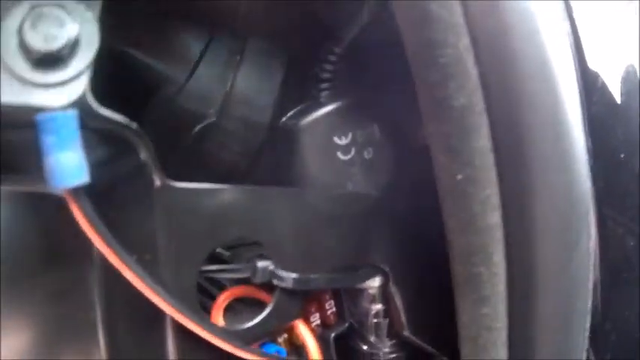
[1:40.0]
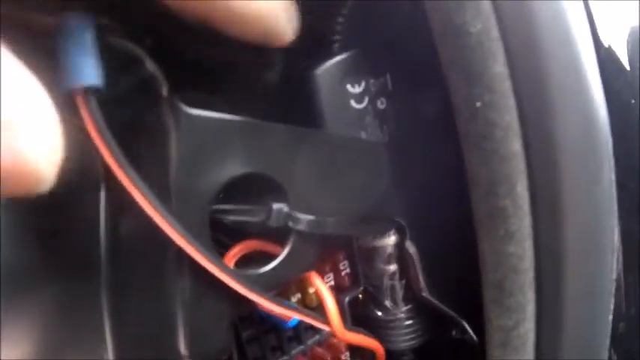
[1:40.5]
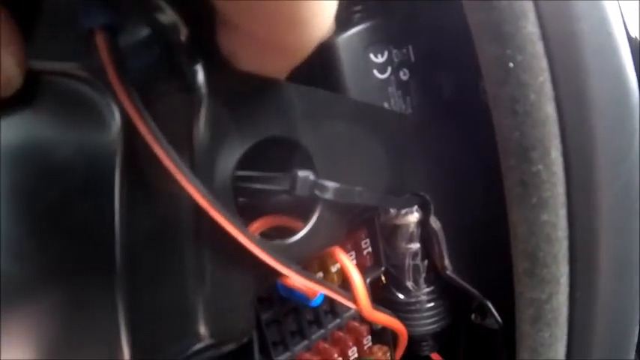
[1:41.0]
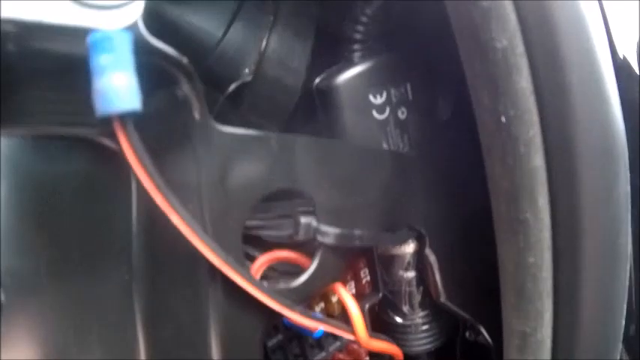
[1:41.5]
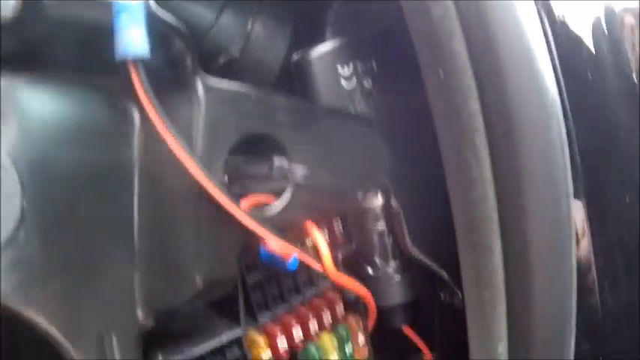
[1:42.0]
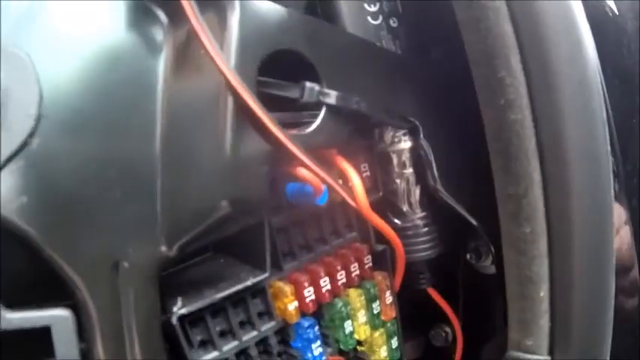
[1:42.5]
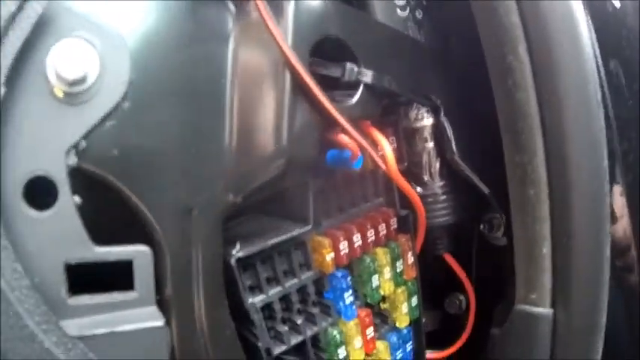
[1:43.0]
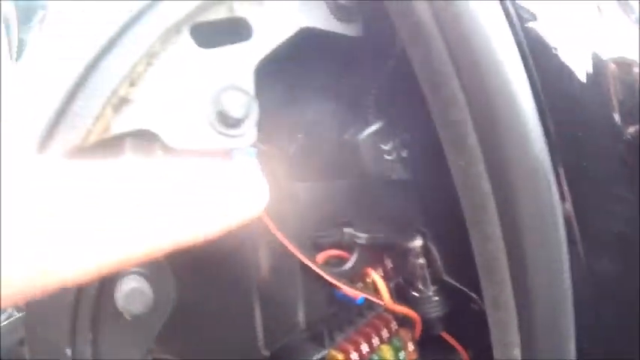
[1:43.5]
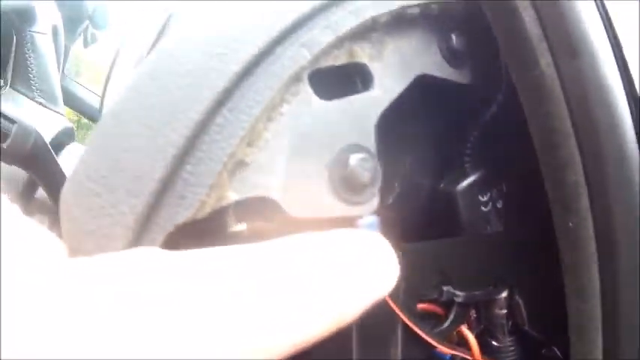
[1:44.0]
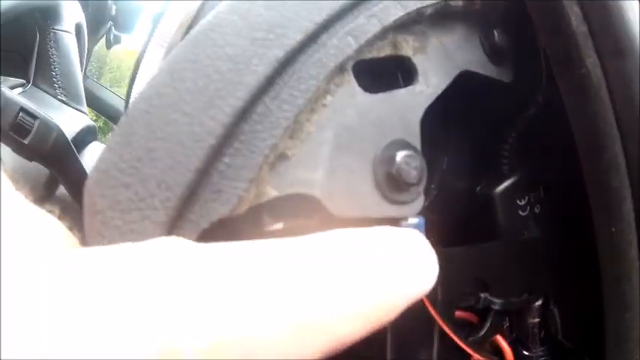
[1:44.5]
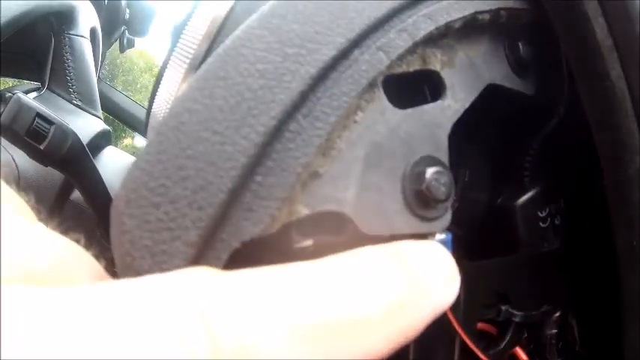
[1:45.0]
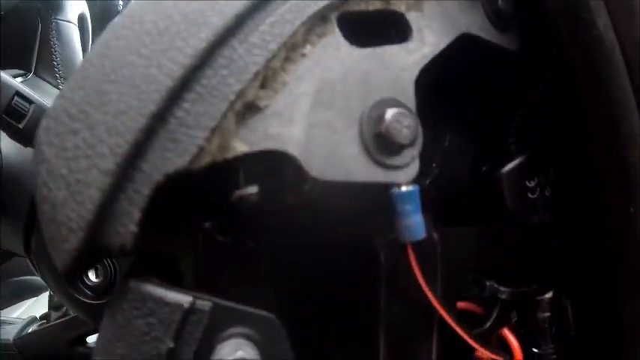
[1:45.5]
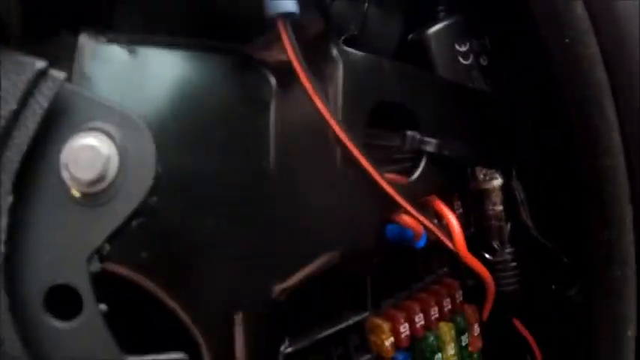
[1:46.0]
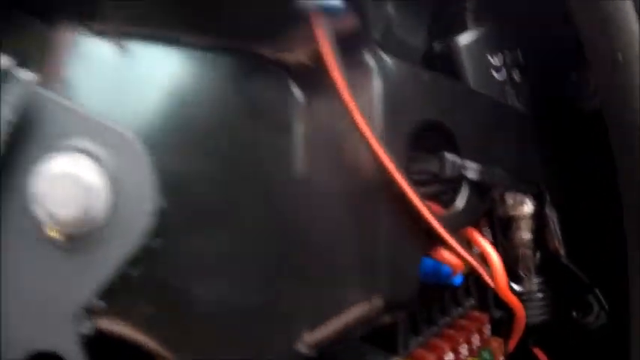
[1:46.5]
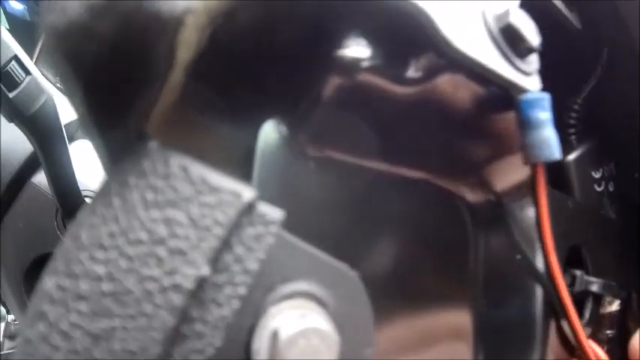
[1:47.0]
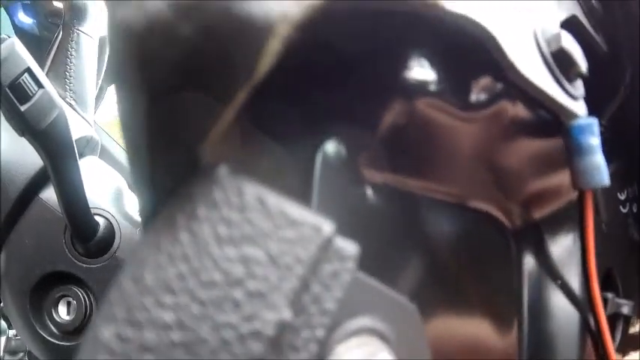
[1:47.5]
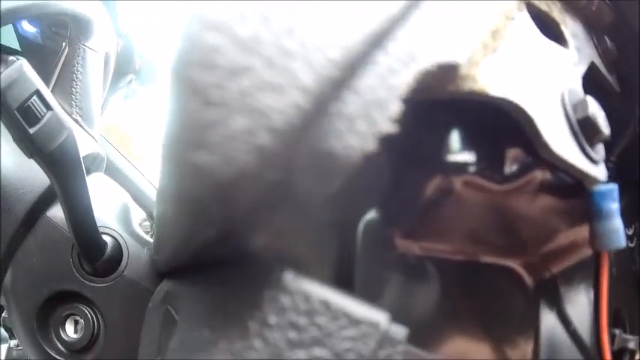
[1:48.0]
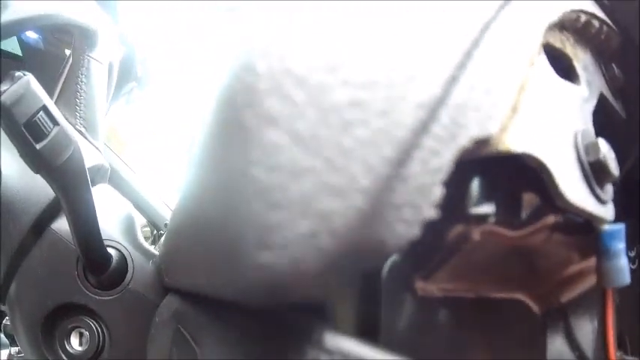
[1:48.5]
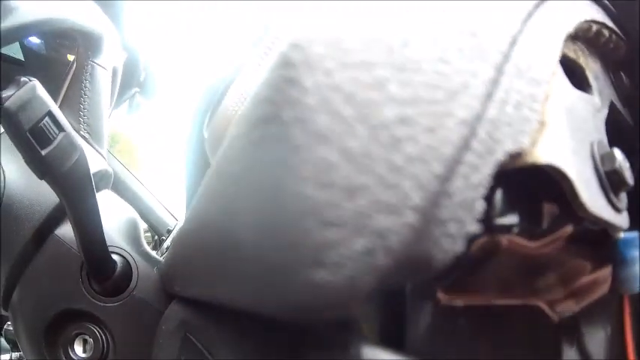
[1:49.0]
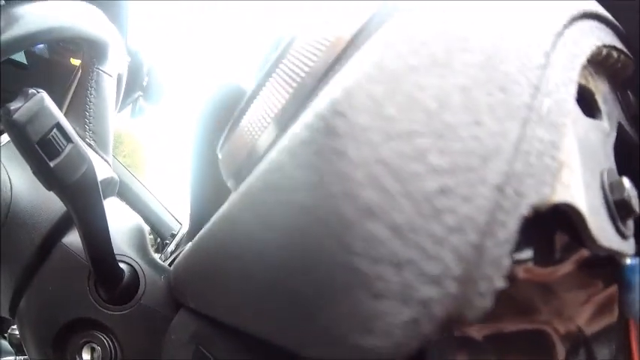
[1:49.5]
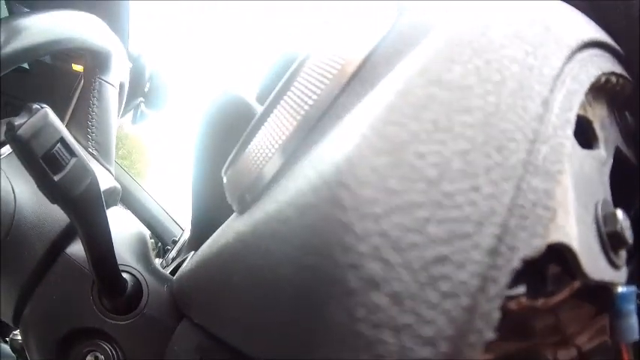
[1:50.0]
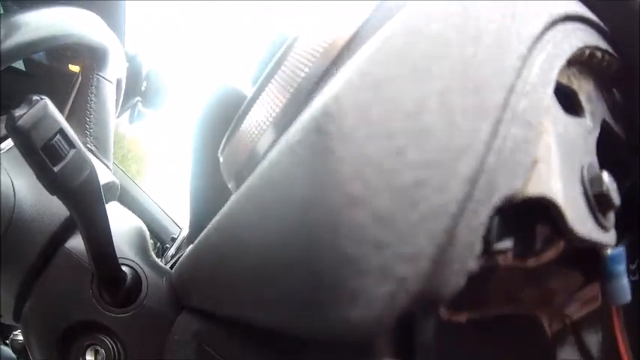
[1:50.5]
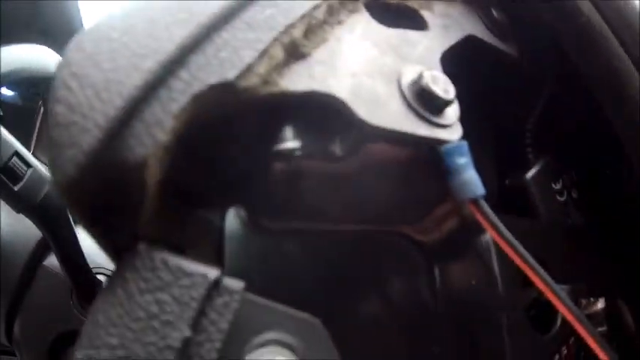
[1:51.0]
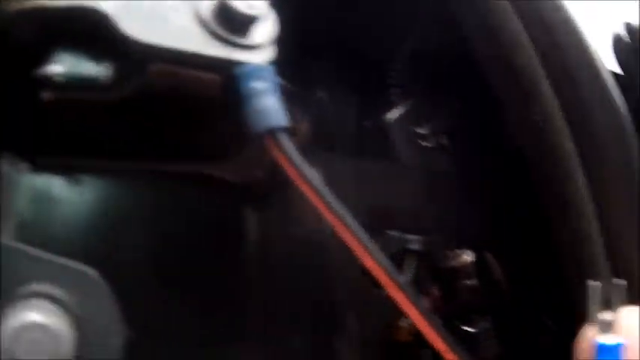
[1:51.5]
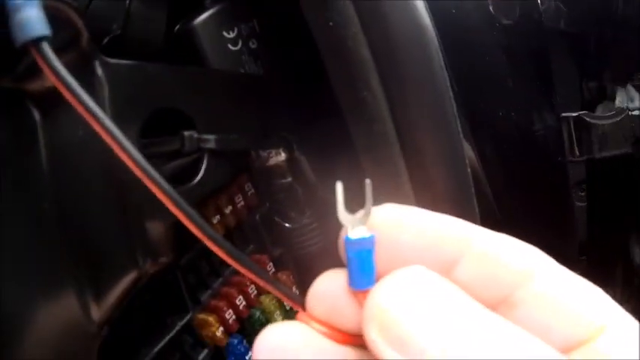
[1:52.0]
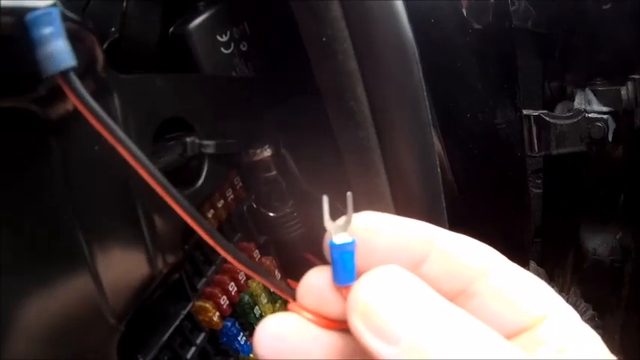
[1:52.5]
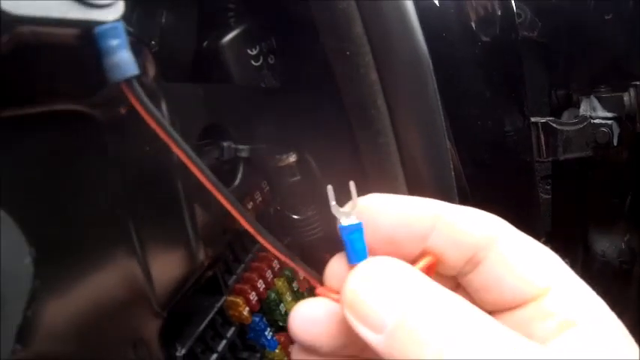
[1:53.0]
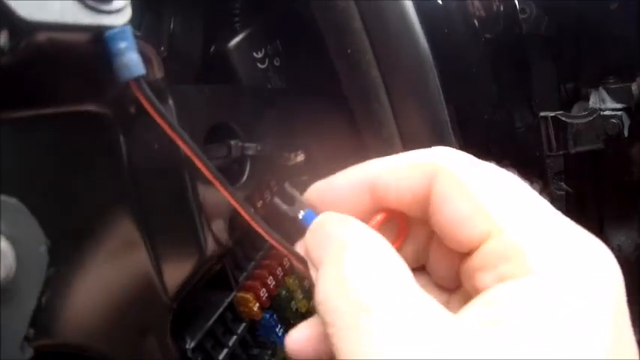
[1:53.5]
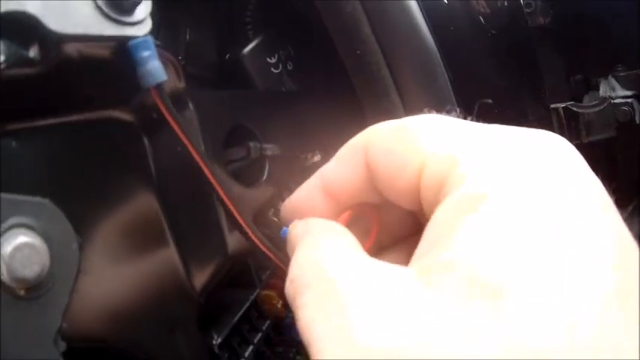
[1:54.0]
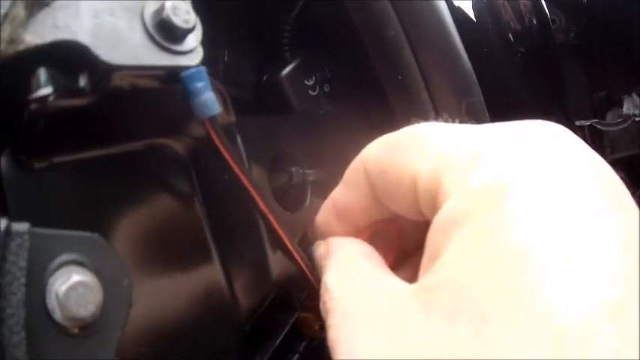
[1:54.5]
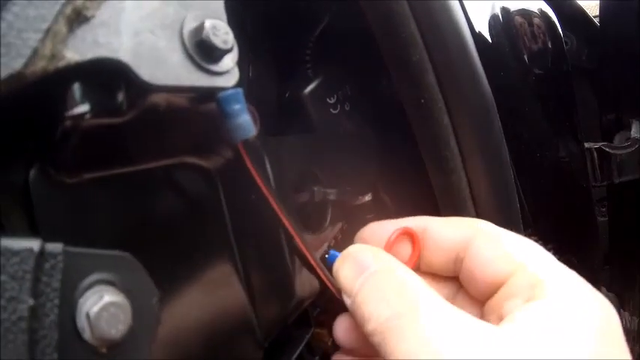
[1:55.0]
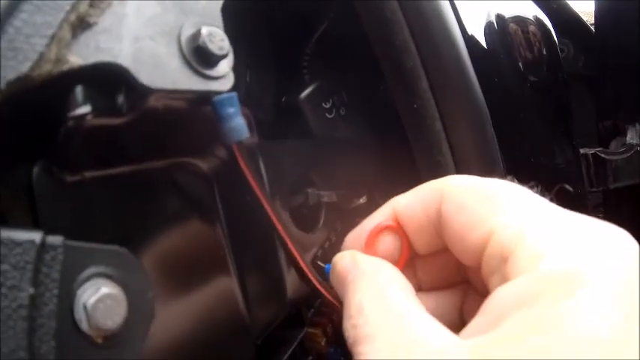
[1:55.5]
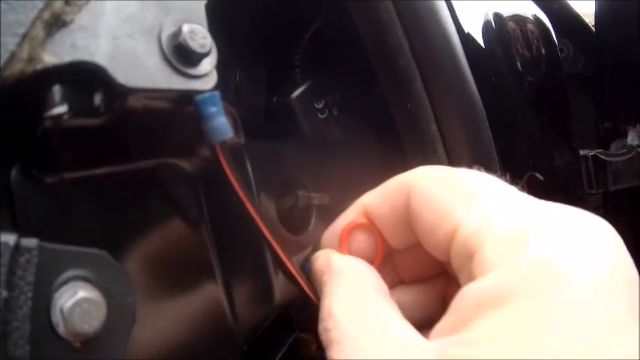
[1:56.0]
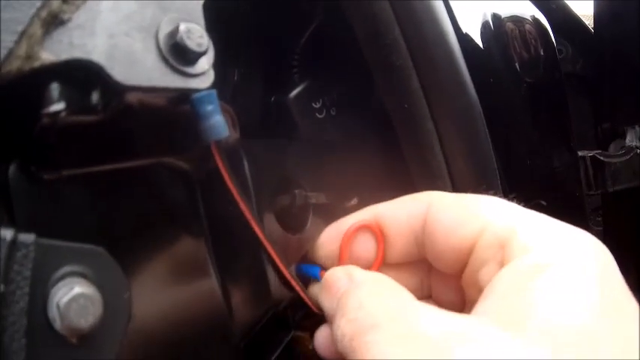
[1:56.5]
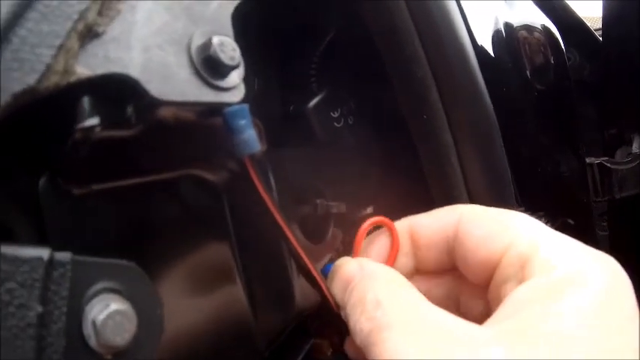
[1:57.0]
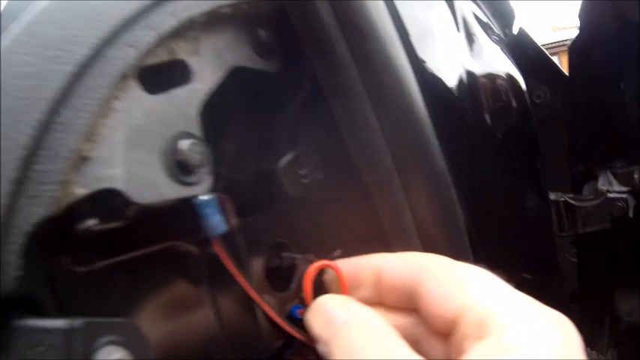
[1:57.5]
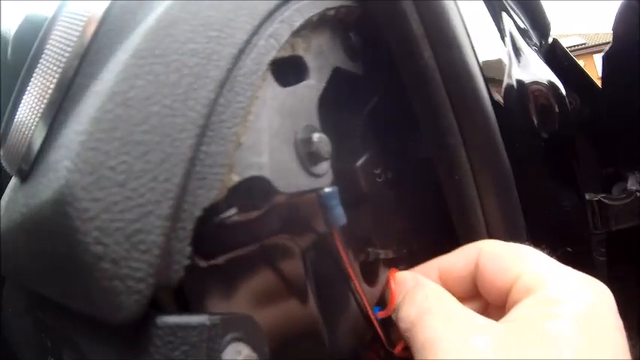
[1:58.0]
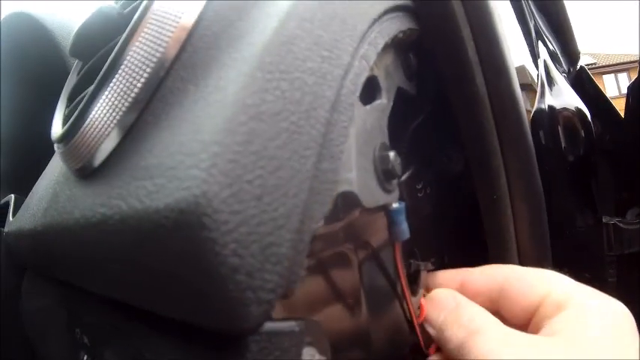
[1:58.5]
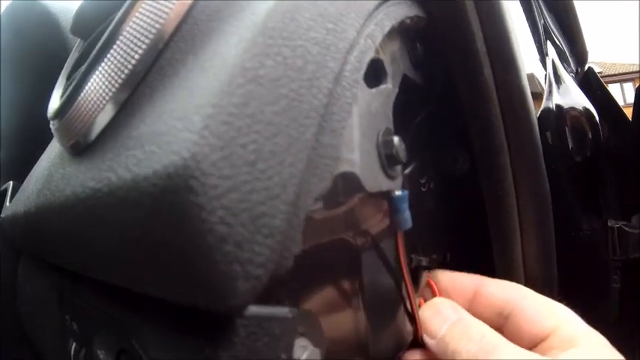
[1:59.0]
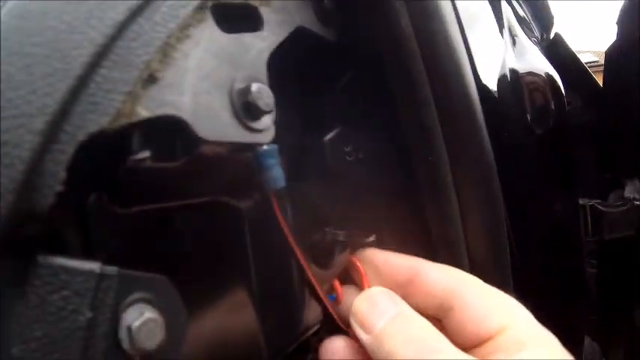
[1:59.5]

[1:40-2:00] In the interior of a car, the opened fuse box shows its fuses, with a couple of orangey-red wires running out of them. The first row of fuses has a little blue plastic thing with a red wire coming out of it, then some fuses that may be red, with the number 10 on them. The next row below is completely empty. The row below that has one yellow fuse with a yellow 5 on it and then five fuses with the number 10 on them. Below that, a little of the next row is visible, which may have a blue fuse, a green one, a yellow one, a green one, and an orange one. Behind that is a strange-looking metal and glass fixture that looks like it may have wires in it, almost like a tiny light bulb. The camera shakes around as if trying to get a good view of the fuses. Some fingers come down and lightly touch the base the fuses are in, then the person points with a finger to a wire coming out of the fuse box. The corner of the console is shown. The person appears to have unplugged one part of the wire: when the camera pans back down toward the fuse box, someone's right hand, with very short fingernails, holds the end of a wire. It looks like a tiny prong, with a little blue on the end of the wire and two little plastic or metal pieces like a small prong. He then puts it into the fuse box, wiggling it in and plugging it in.